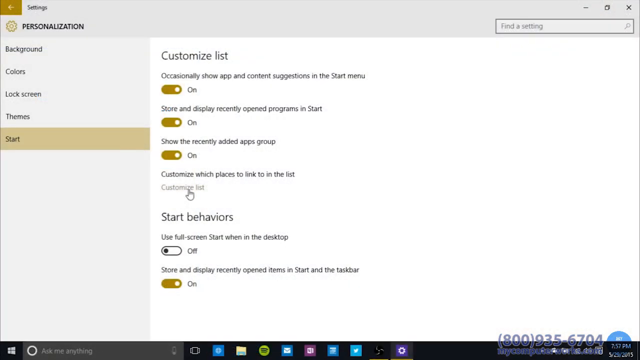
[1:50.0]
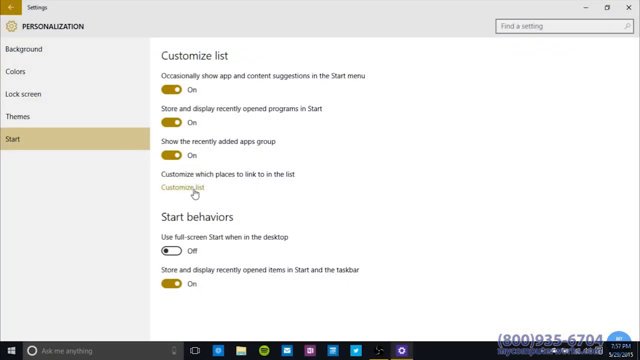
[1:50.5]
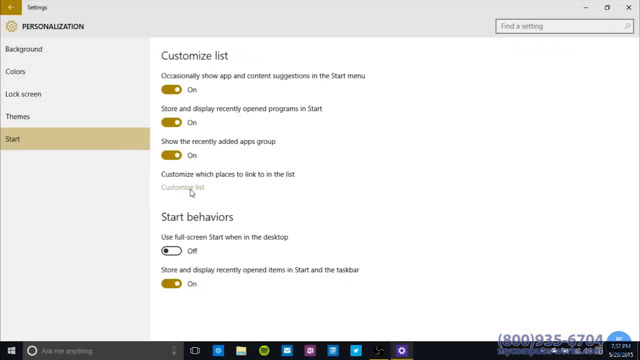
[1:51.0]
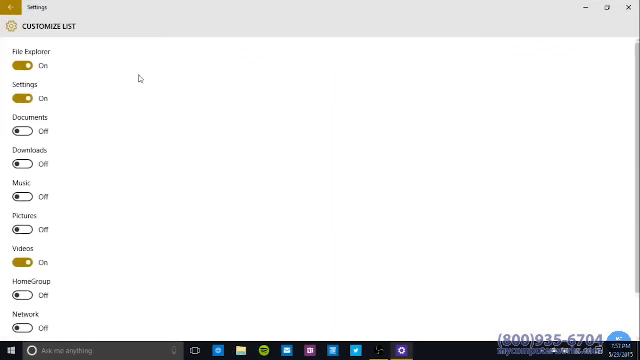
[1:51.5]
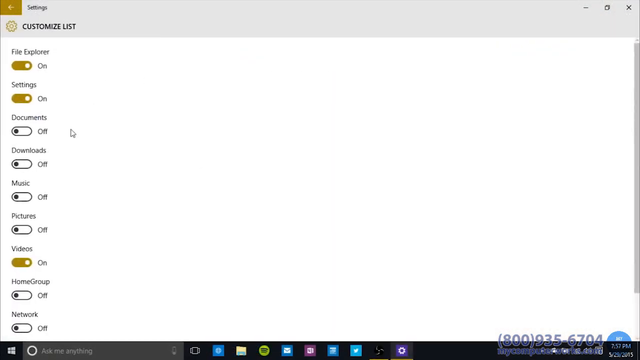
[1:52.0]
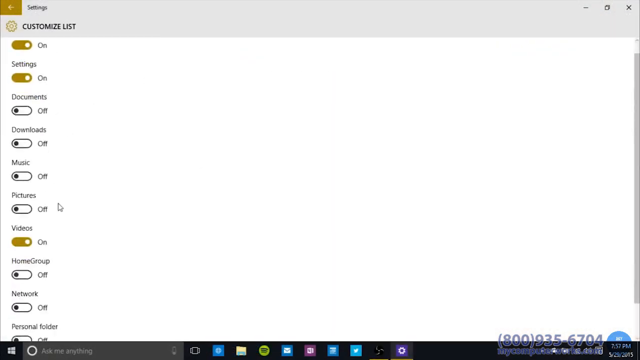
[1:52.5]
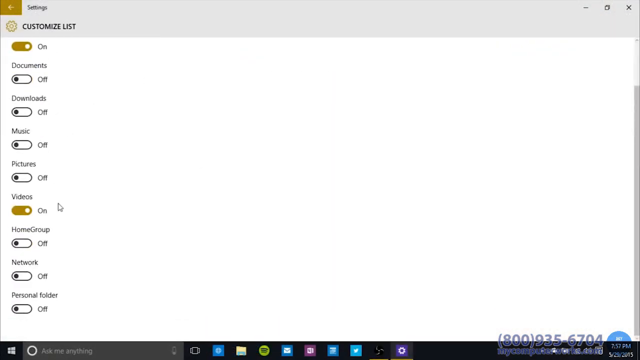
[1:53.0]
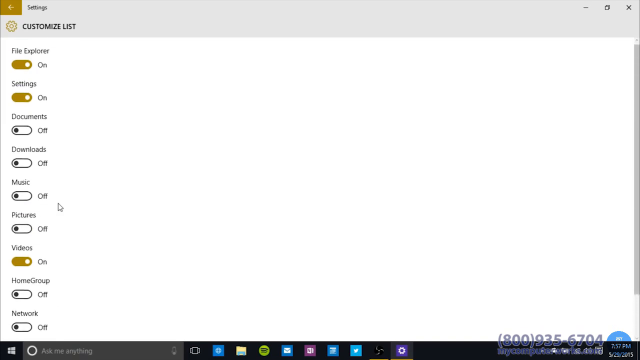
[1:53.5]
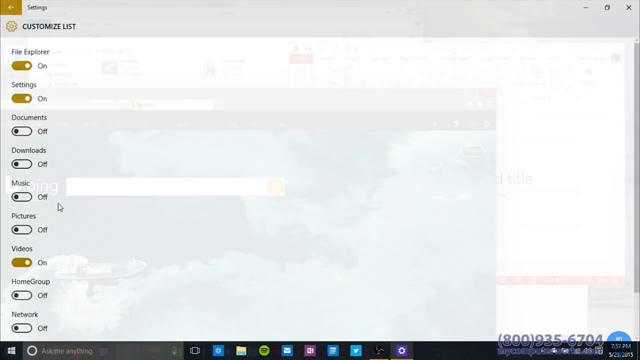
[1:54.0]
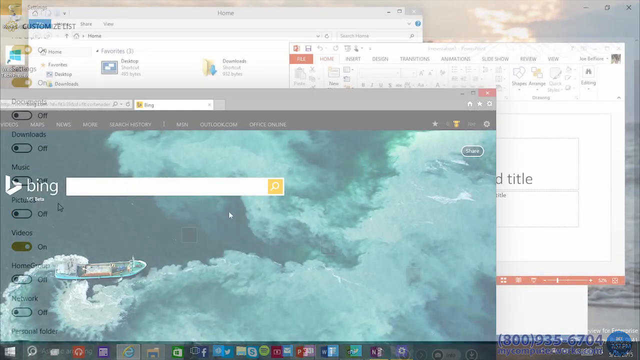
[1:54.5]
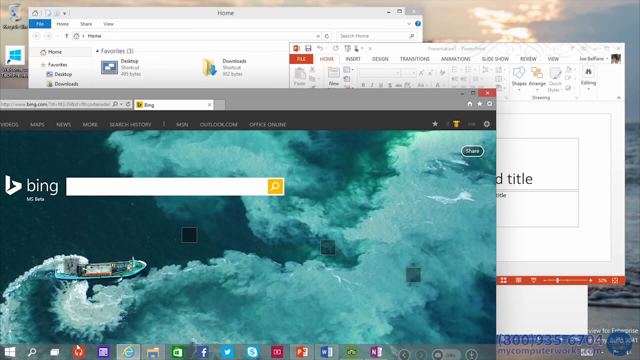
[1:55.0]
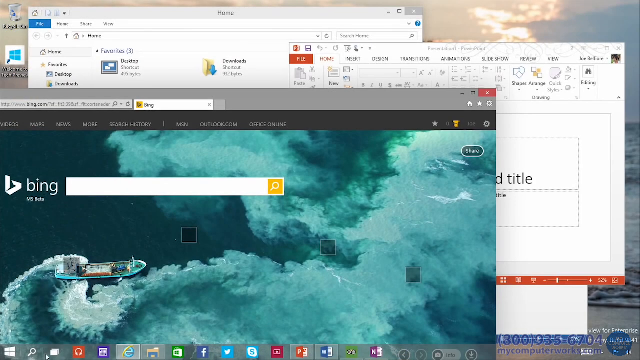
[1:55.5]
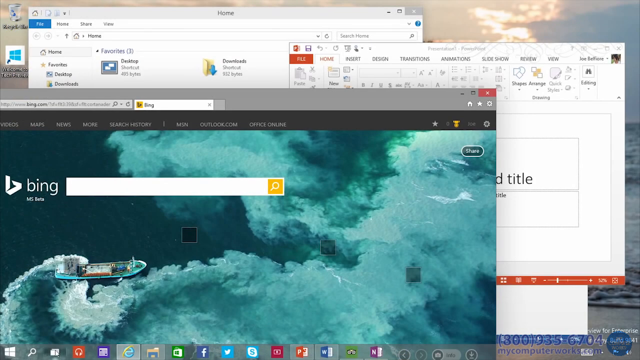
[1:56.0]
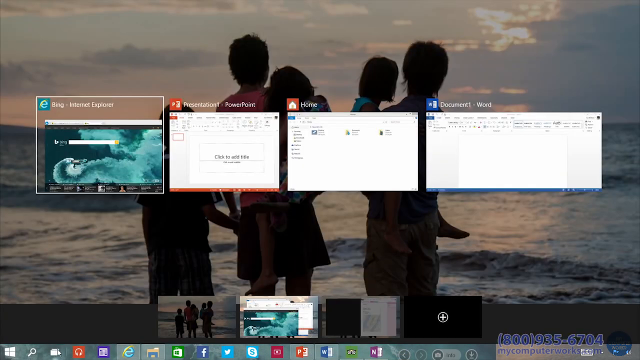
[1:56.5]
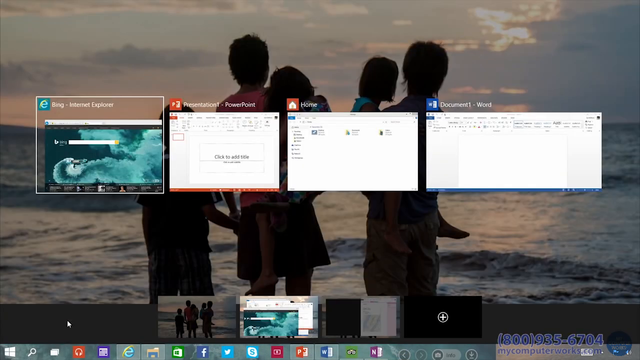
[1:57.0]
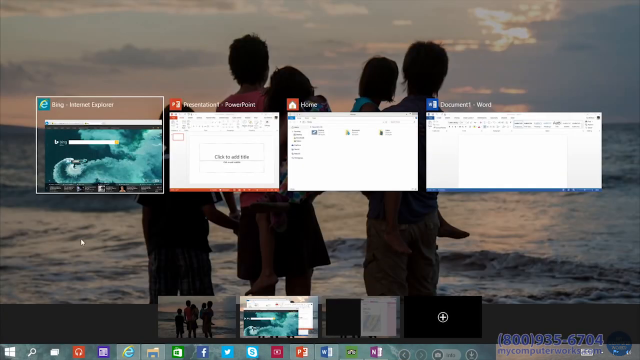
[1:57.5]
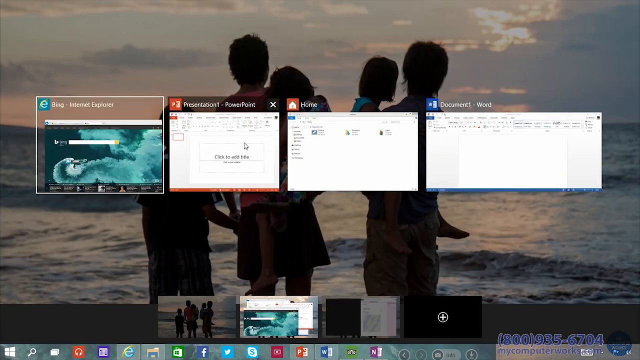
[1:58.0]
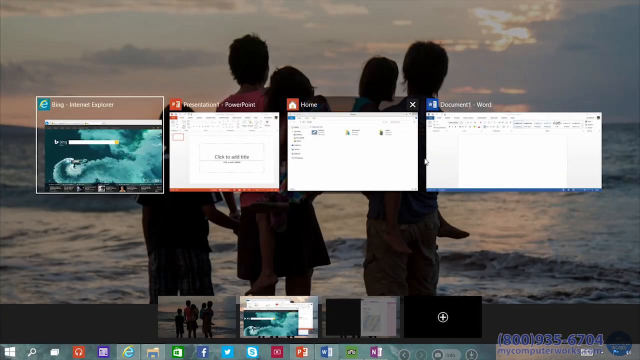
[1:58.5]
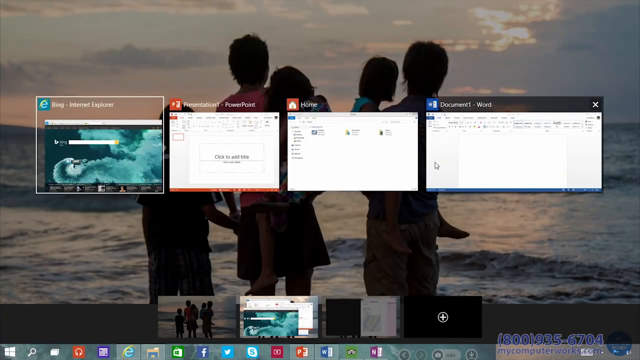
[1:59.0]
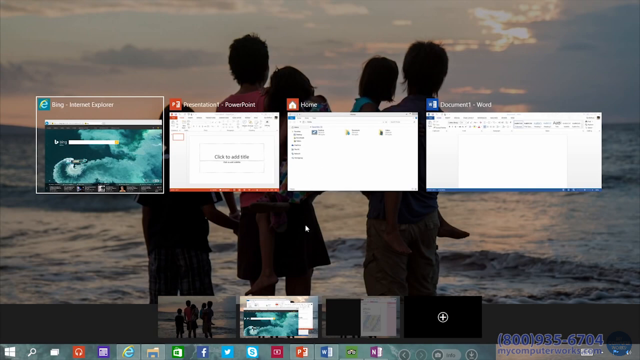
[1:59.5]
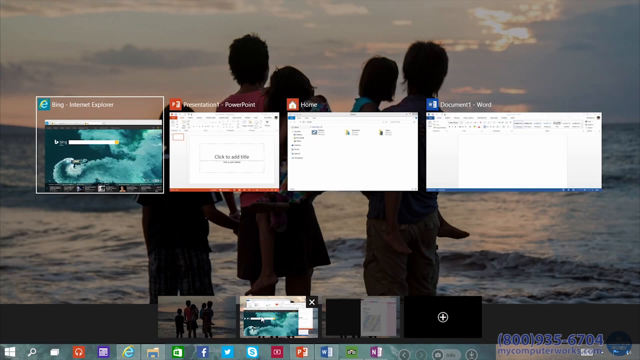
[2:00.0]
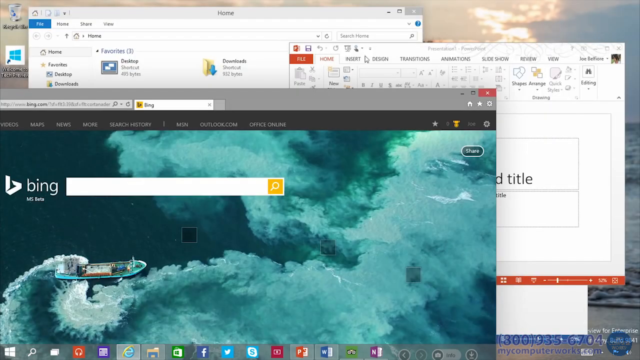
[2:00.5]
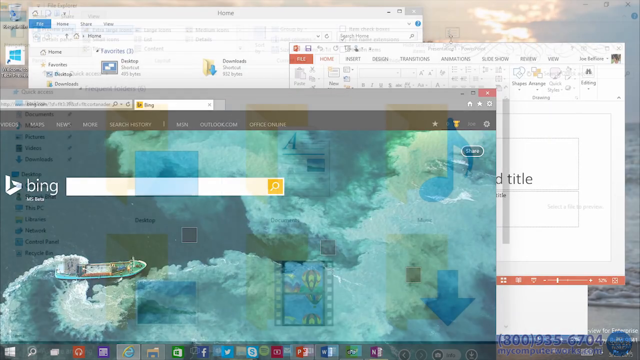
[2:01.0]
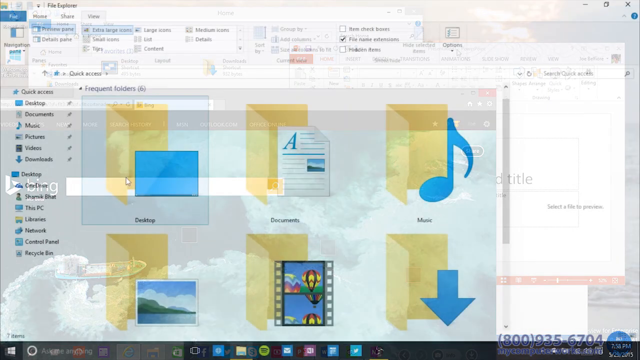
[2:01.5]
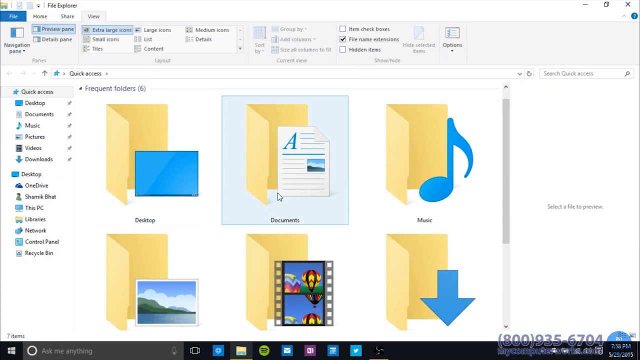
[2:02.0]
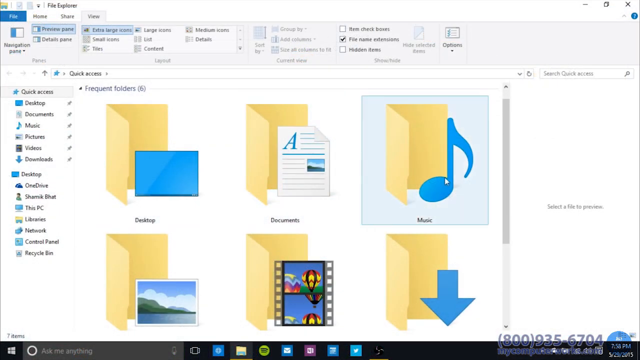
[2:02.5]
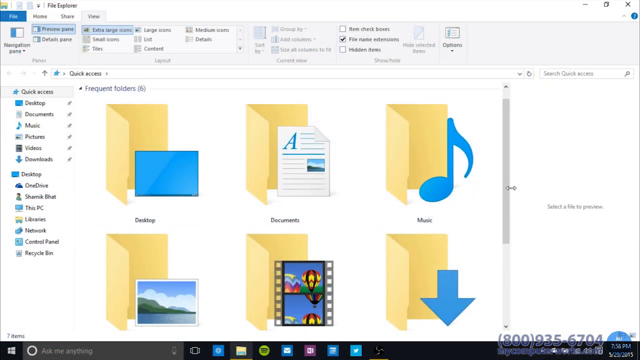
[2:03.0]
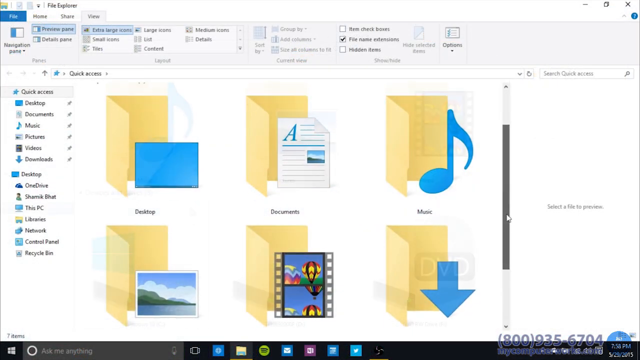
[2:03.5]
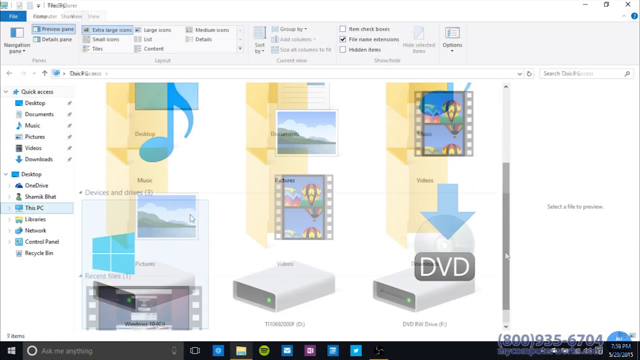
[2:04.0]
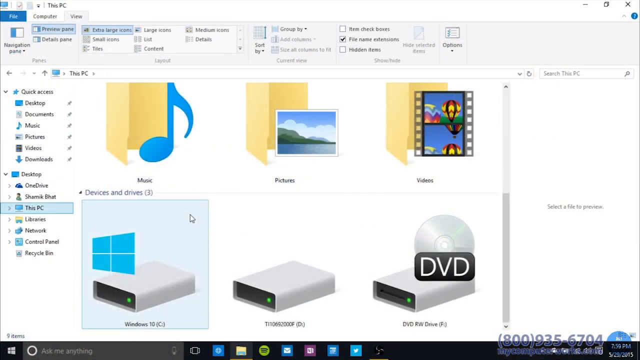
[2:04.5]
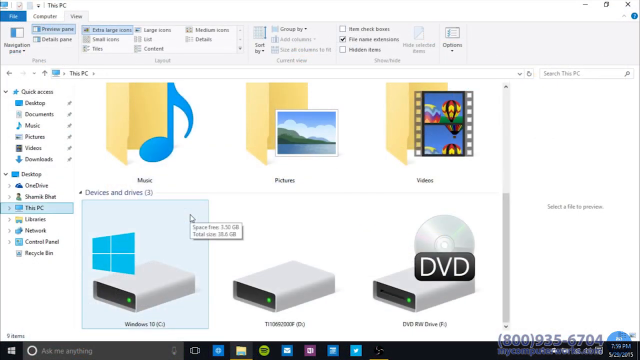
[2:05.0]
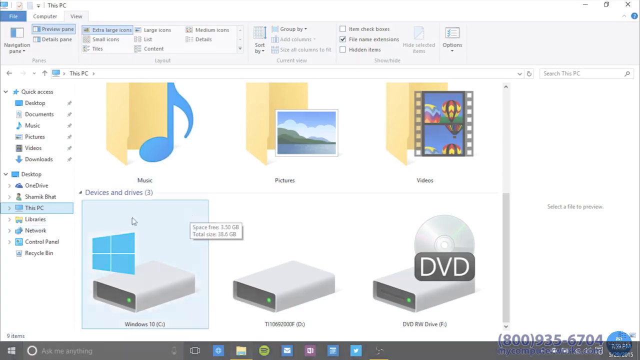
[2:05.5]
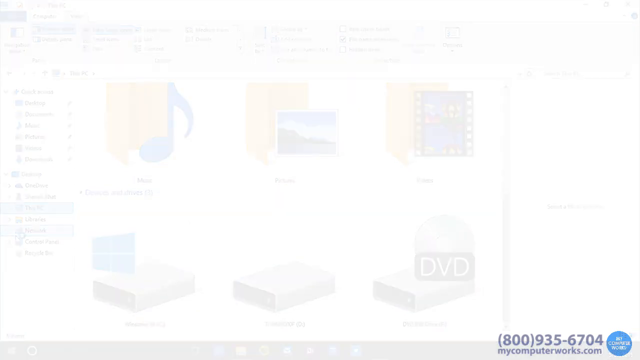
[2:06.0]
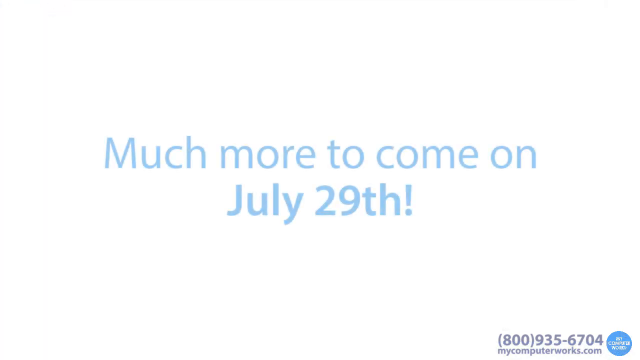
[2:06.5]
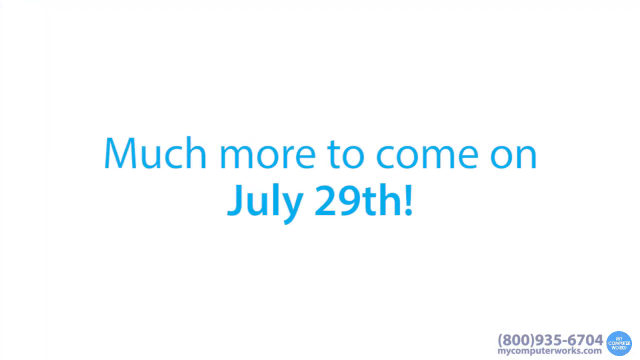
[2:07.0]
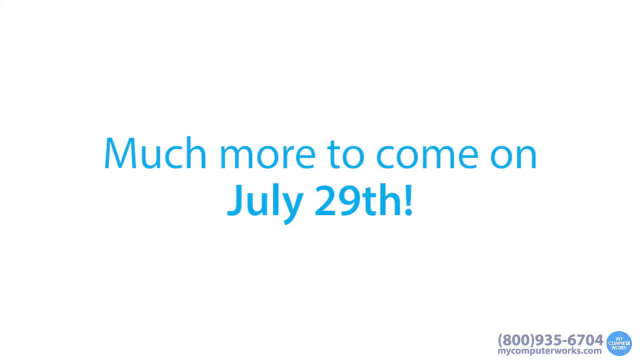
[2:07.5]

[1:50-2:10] The cursor moves over a clickable link in the right-hand section that says "Customize List". It is clicked, opening a new white control panel with "Customize List" written at the top, which is scrolled down. A cross dissolve leads to a new layout on the computer desktop with the picture of the family in the background. Several panels are open on top of each other: the one at the back says Home, the one in front of it to the right says PowerPoint, and the one on top is the Bing web browser, which dominates the screen. It has a horizontal search bar at the top of a picture looking down at a boat swirling around in a blue sea. The shot cuts to a different view of the desktop, with the family photograph in the background and four panels arranged in a horizontal line in the middle of the screen. The first panel, on the left, is highlighted; it is the web browser with the boat, with "Bing Microsoft Explorer" written at the top. Next to it is Presentation 1 PowerPoint showing the PowerPoint screen, then the Home panel with some items inside, and on the right Document 1 Word. At the bottom of the screen four smaller panels are arranged horizontally: the first is the shot of the family on the beach, the next is the screen with the different panels open on the desktop, the third appears to be divided vertically with black on the left and some lighter display on the right, and the fourth is all black with a white cross in the centre. The cursor goes up to the four main panels and moves from left to right over them one by one before moving back across. It then moves down to the row of smaller panels and clicks the second one, showing the desktop with all the screens open on top of each other. The view quickly returns to that image before fading to a shot in File Explorer. The scroll control on the right moves down, and a dissolve leads to a shot at the bottom showing three disk drives, including one with the Windows 10 logo on it. The screen fades to white, and blue text fades into the middle: "Much more to come on July 29th!"